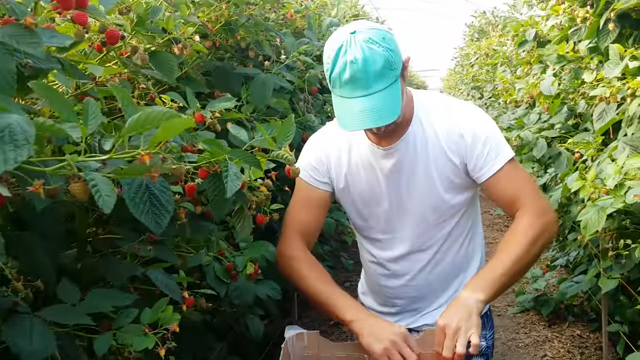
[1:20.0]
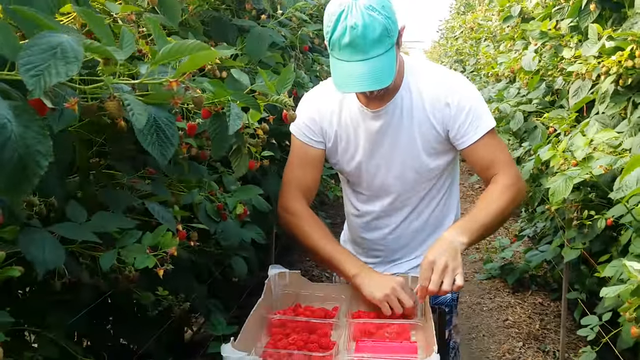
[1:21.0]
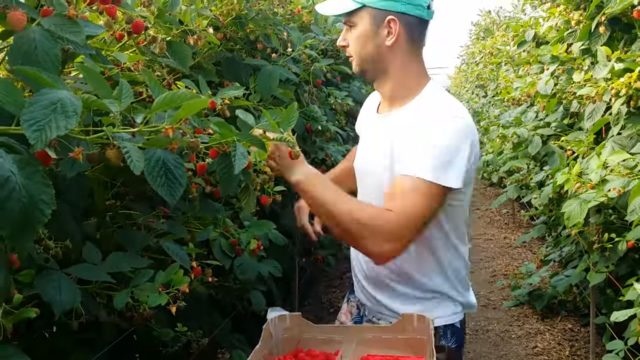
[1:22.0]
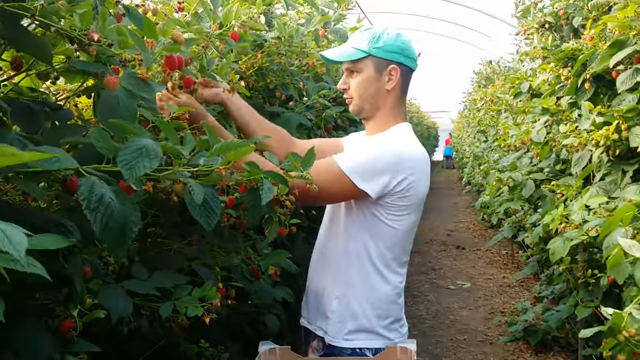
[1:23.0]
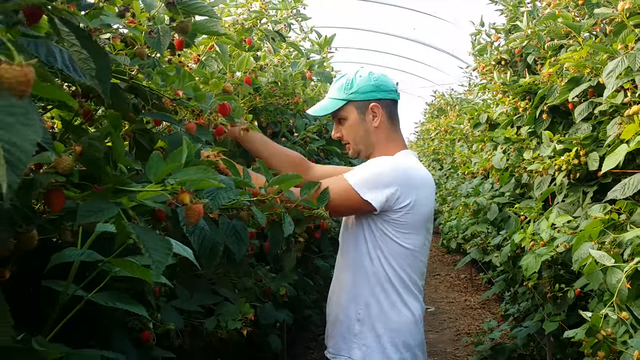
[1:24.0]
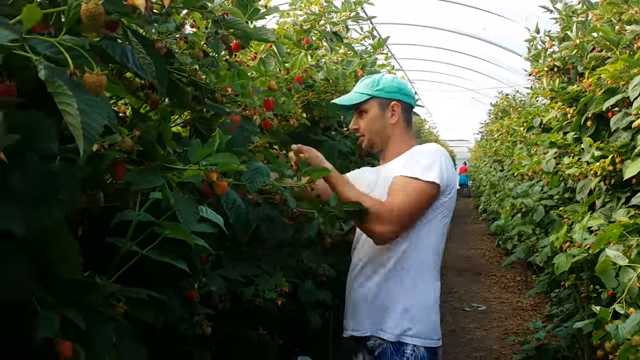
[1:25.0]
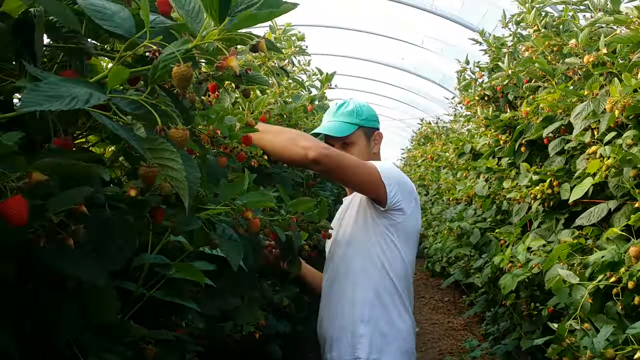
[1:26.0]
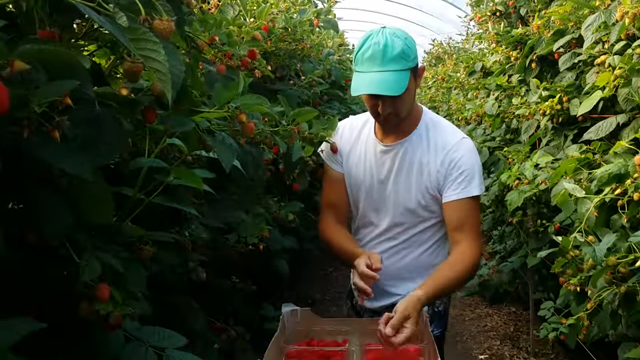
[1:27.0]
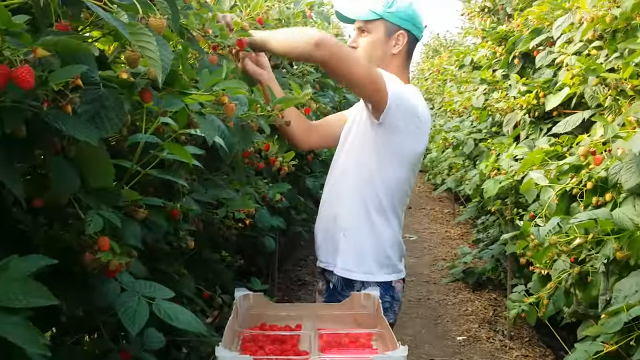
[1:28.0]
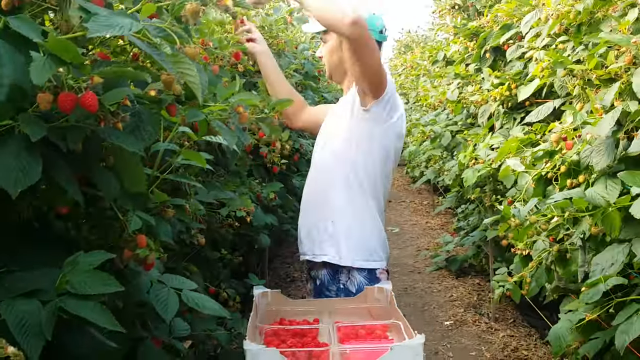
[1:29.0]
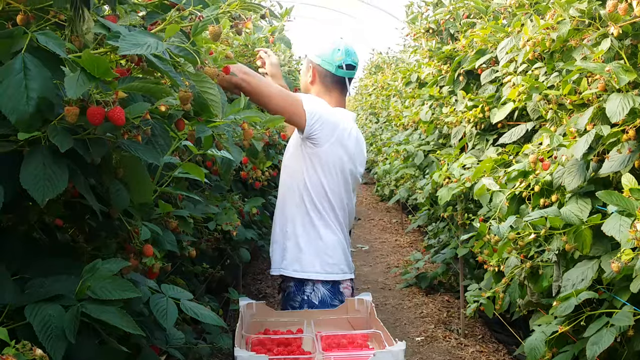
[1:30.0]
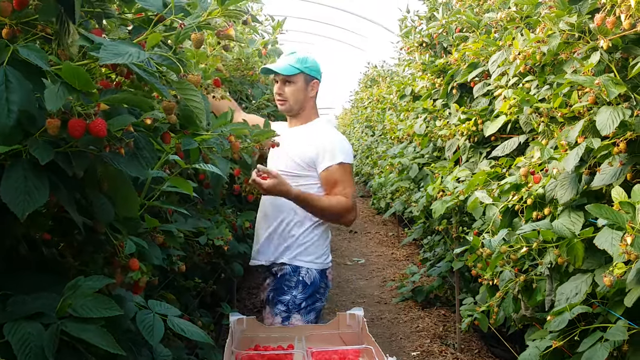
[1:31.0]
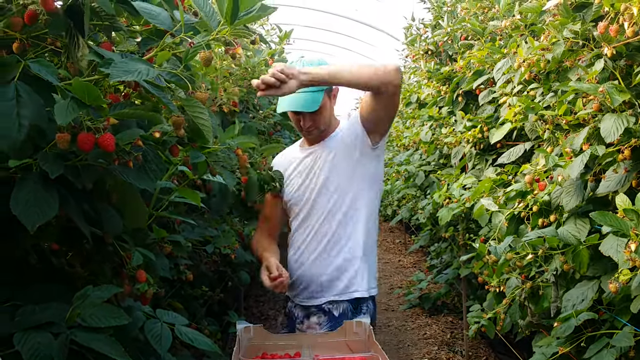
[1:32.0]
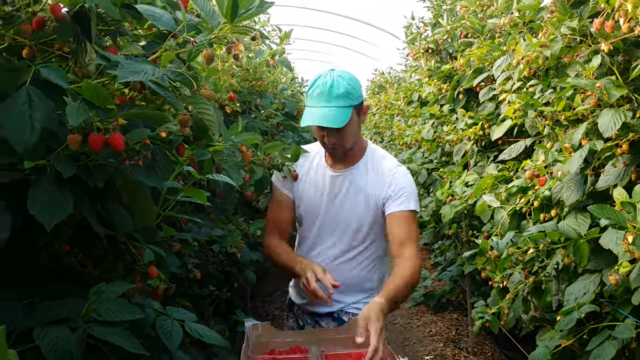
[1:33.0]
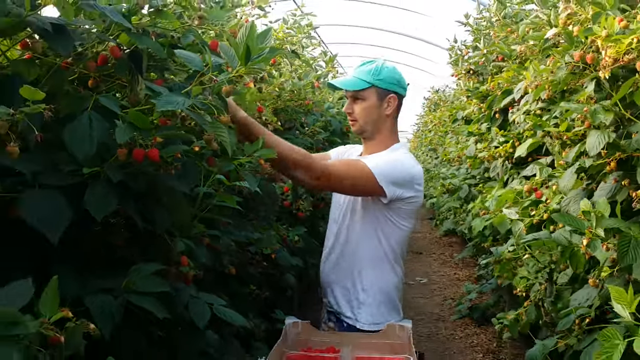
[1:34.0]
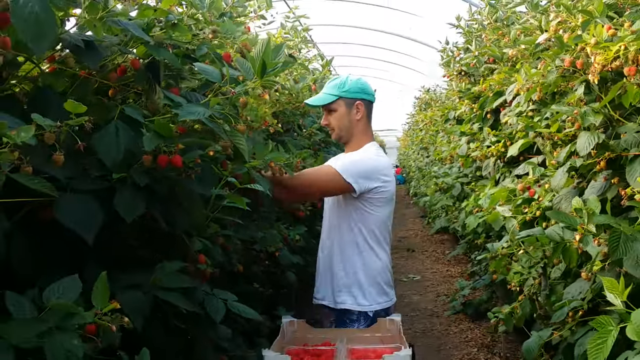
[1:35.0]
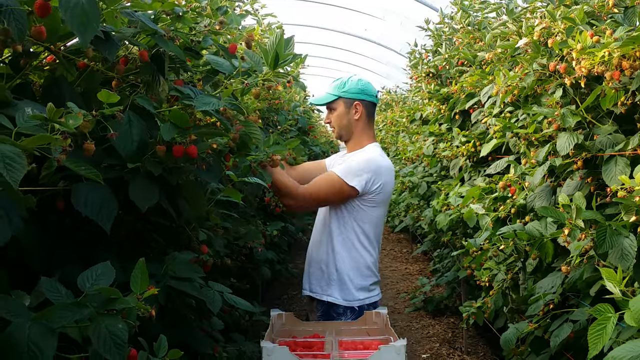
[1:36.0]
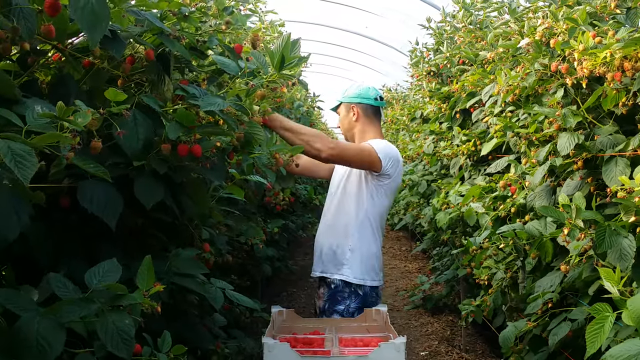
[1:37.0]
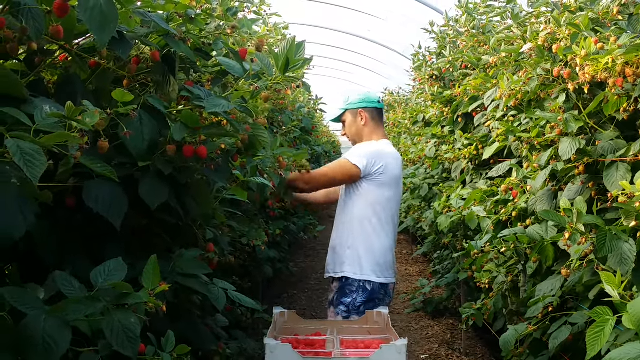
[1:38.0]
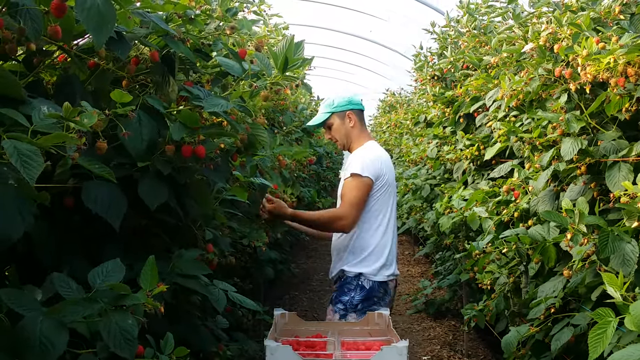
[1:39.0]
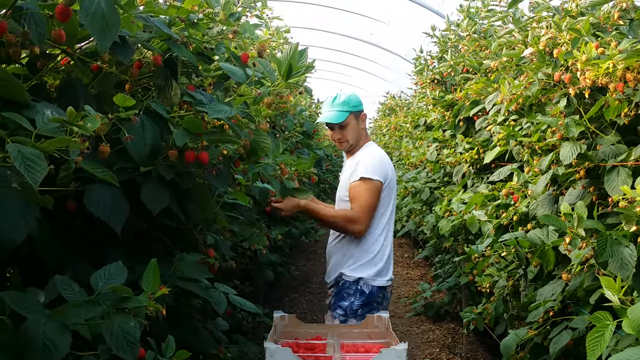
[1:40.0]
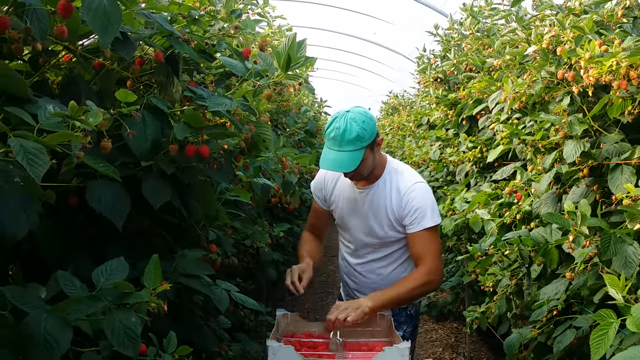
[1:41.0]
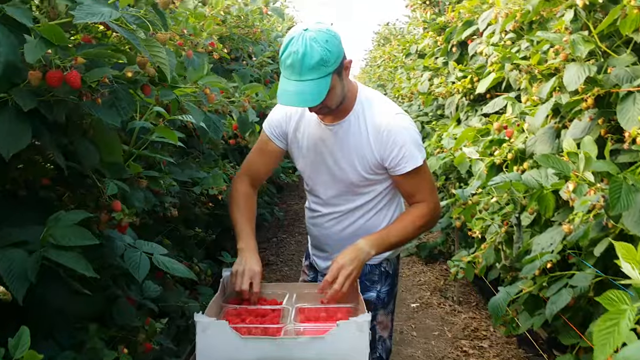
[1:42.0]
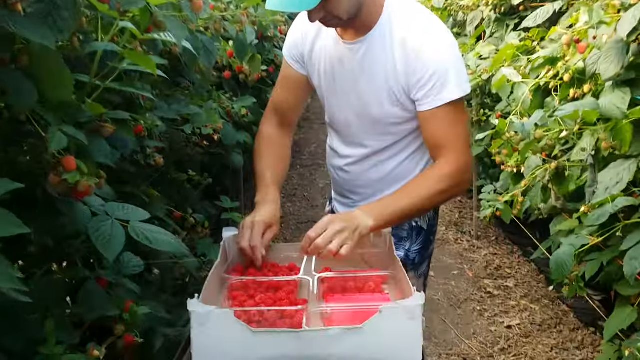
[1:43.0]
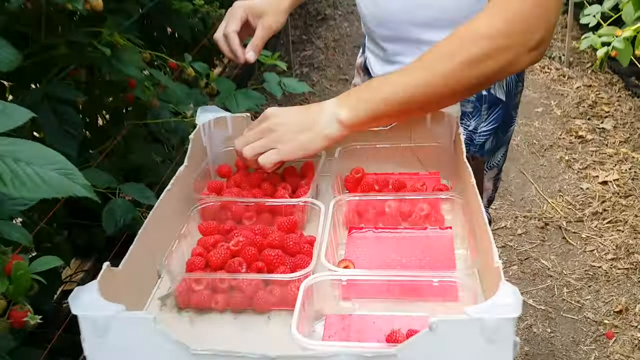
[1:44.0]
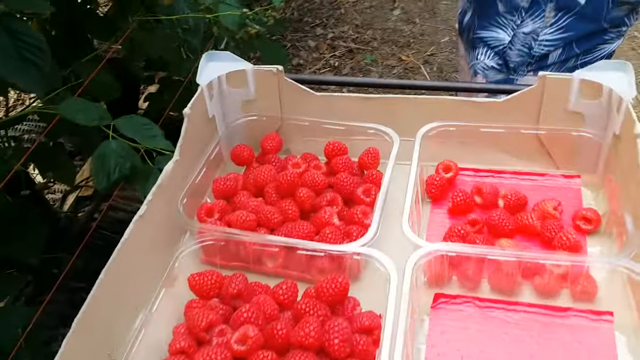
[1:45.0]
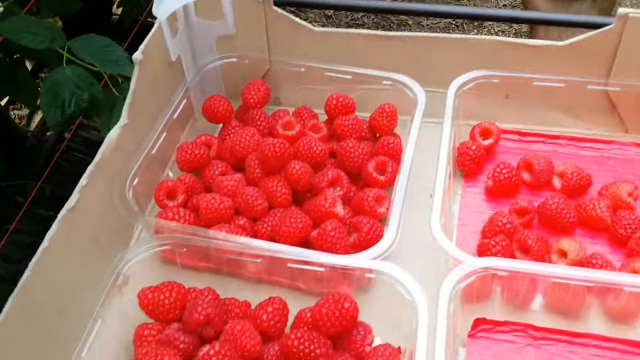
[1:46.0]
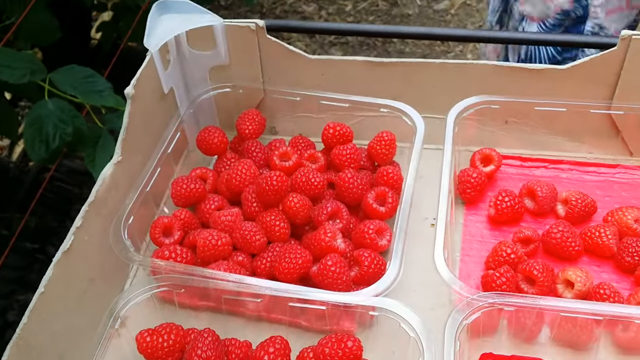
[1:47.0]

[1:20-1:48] The man picking the raspberries is shown in profile from his left side. He wears the light mint baseball cap, a white short-sleeved shirt, and pink and white shorts with blue leaves, and he has tan skin. He picks the raspberries very quickly, gathering a handful before moving them rather than placing them one at a time, then puts them in the clear containers. The camera zooms in, showing that the clear containers are square. He seems to have filled the first container, which is the leftmost one from the camera's view and the one closest to him on his right side.